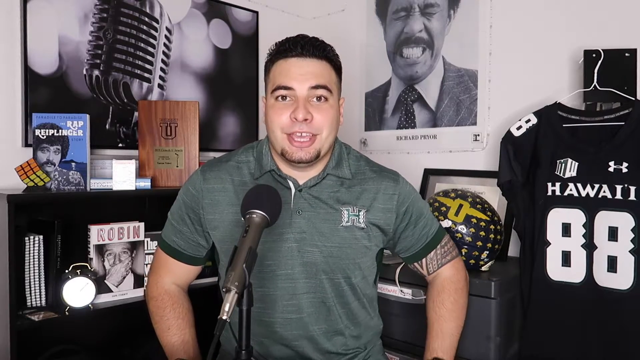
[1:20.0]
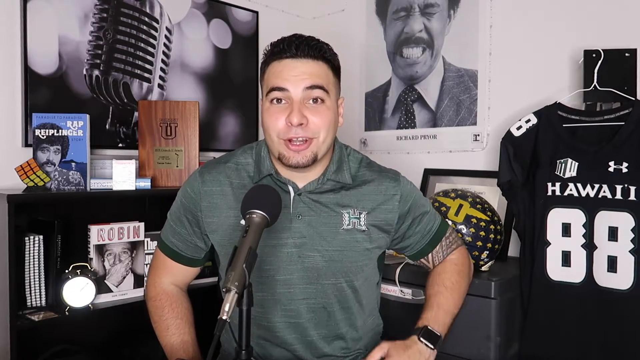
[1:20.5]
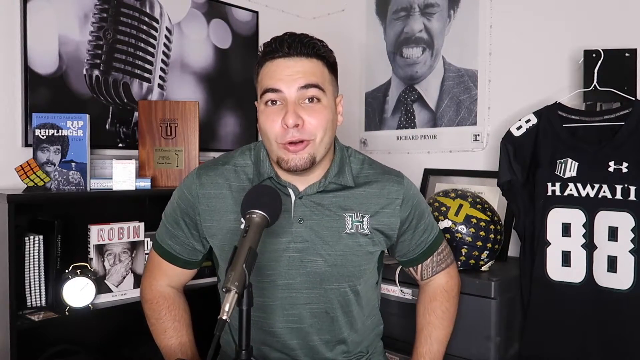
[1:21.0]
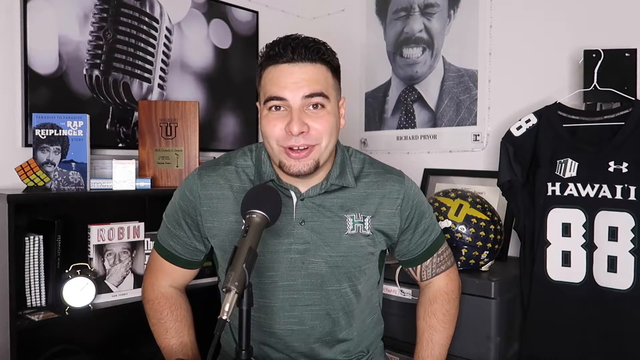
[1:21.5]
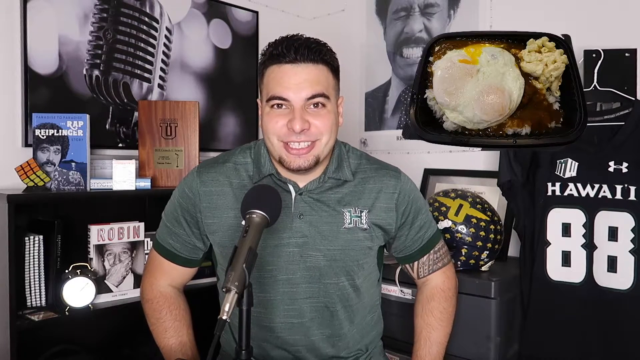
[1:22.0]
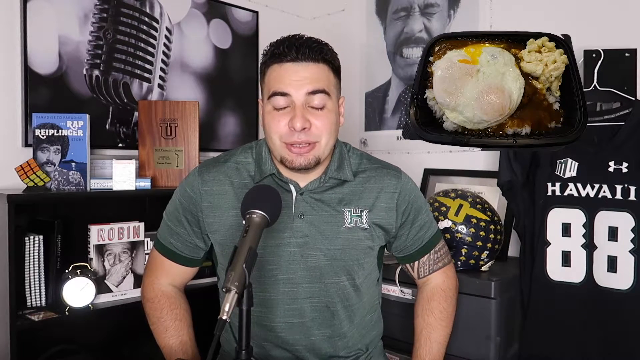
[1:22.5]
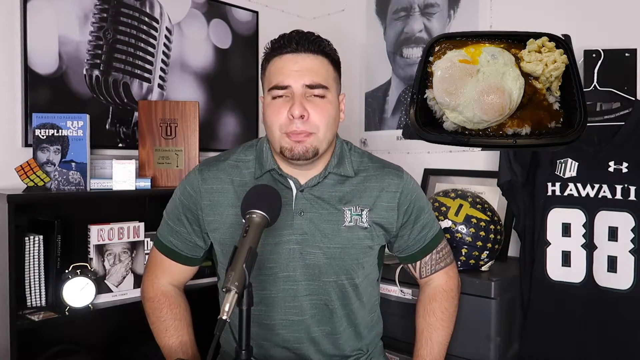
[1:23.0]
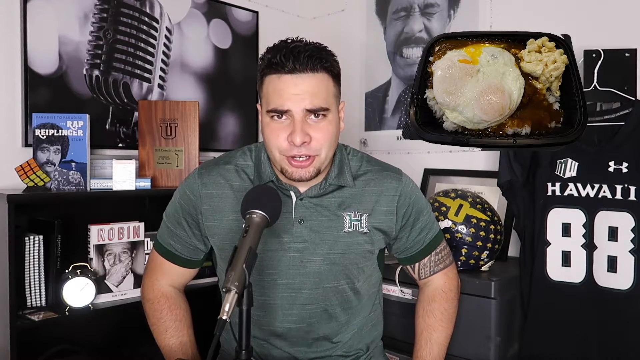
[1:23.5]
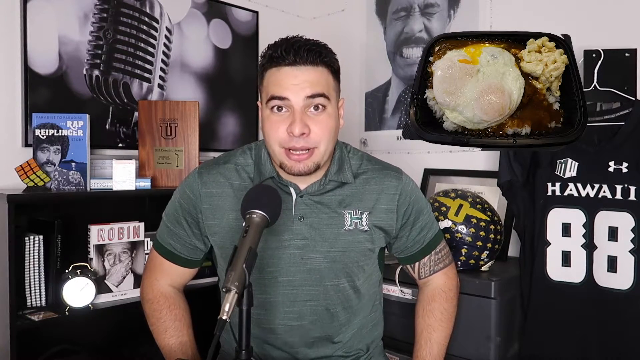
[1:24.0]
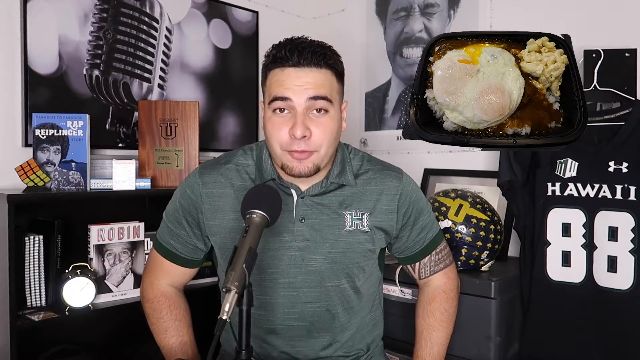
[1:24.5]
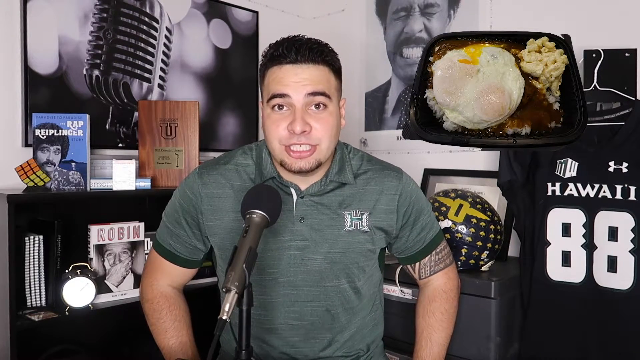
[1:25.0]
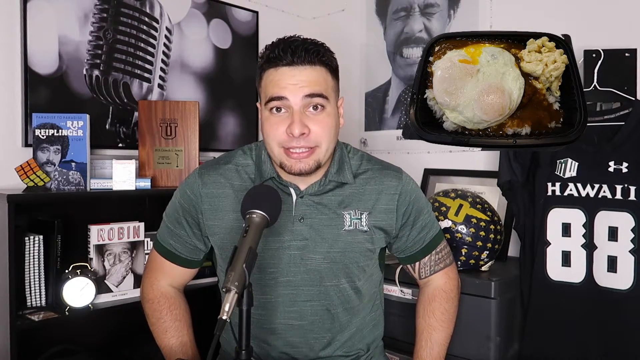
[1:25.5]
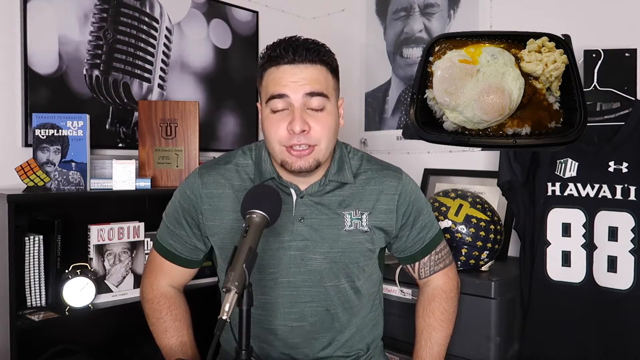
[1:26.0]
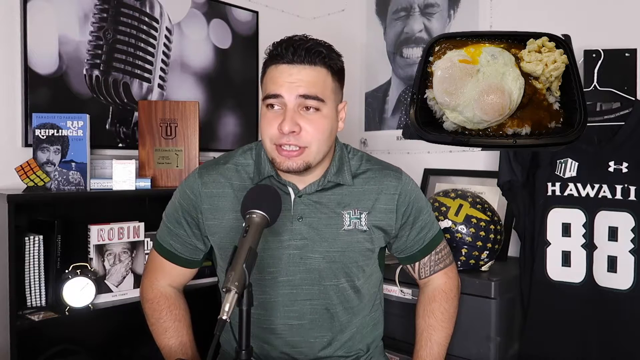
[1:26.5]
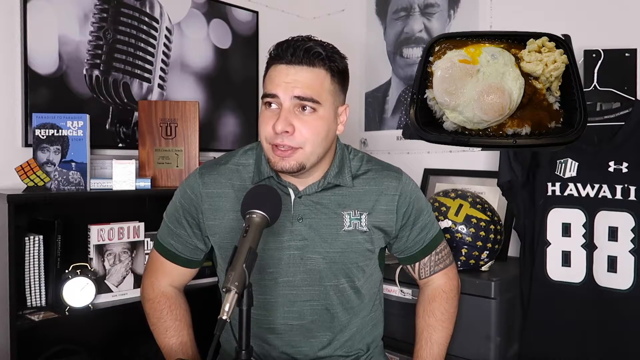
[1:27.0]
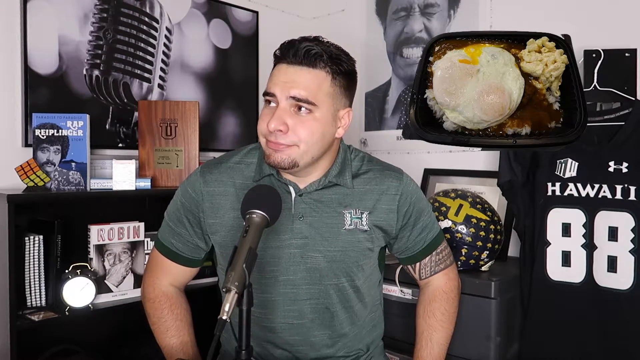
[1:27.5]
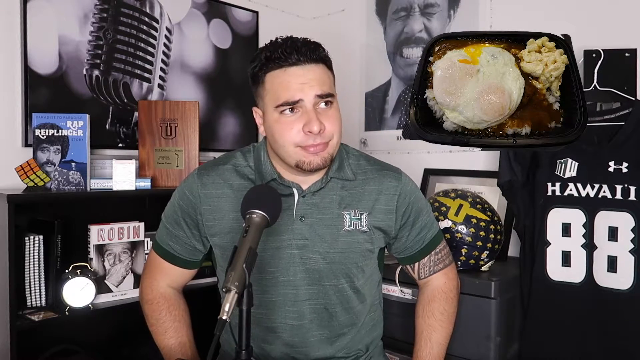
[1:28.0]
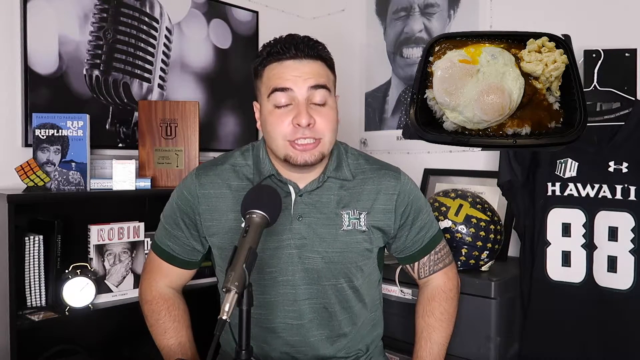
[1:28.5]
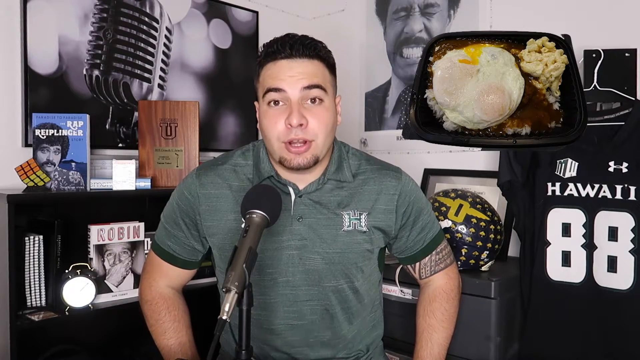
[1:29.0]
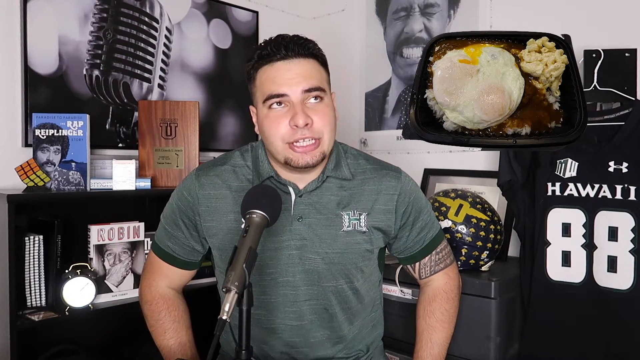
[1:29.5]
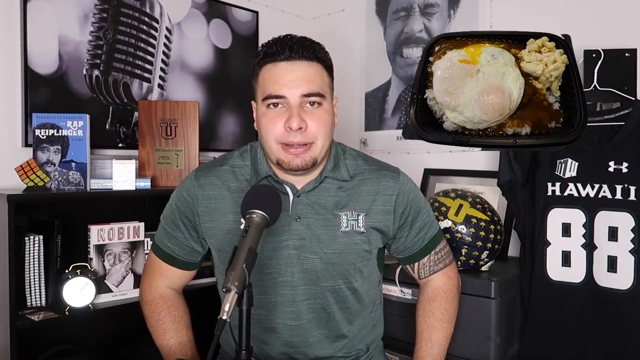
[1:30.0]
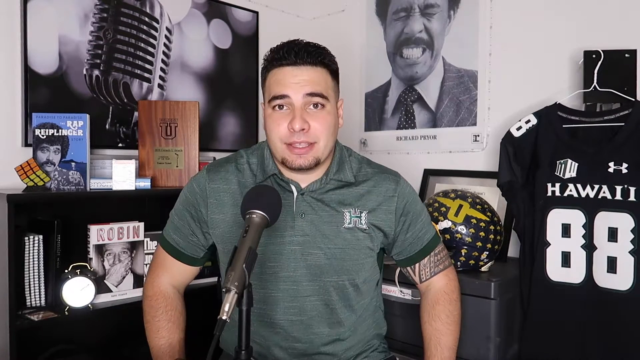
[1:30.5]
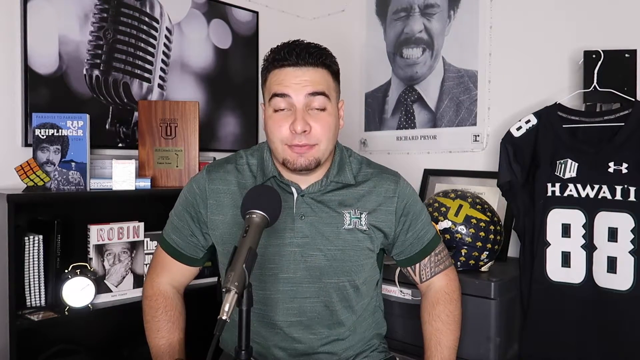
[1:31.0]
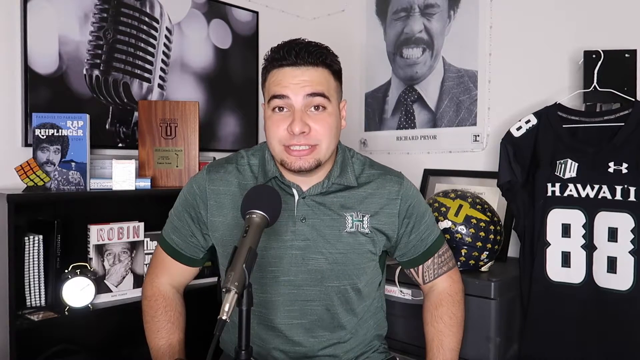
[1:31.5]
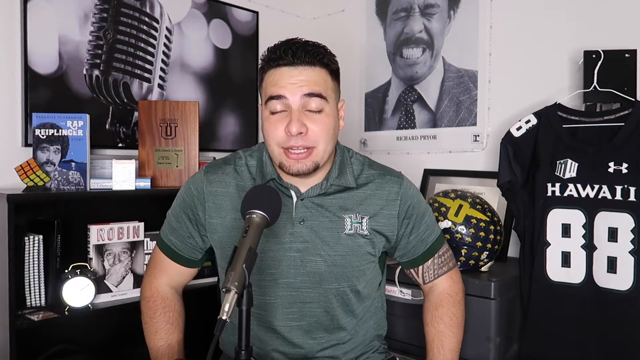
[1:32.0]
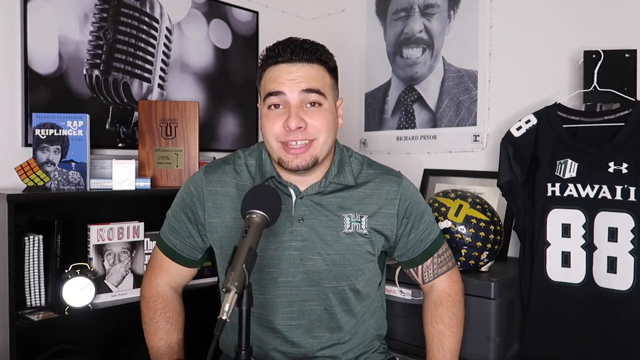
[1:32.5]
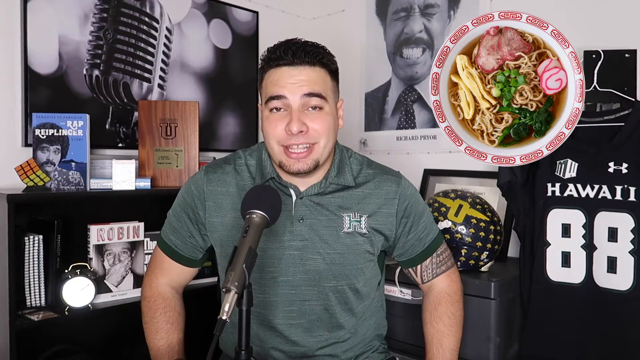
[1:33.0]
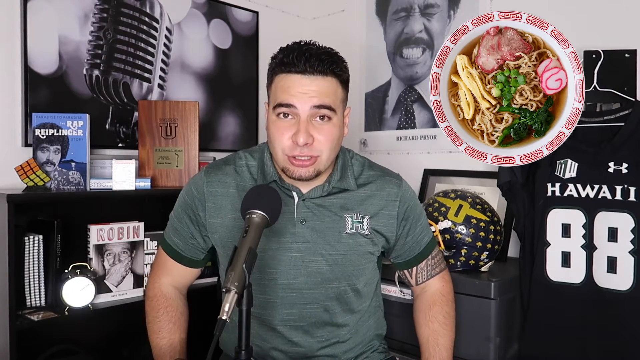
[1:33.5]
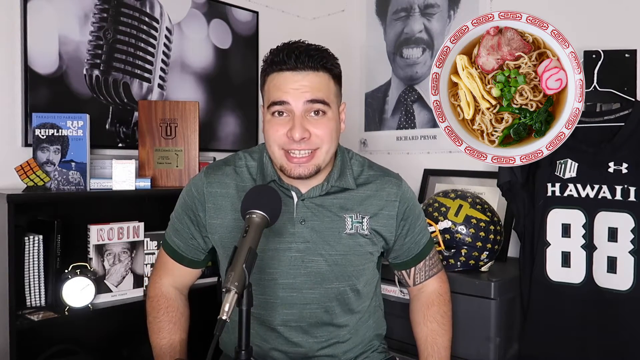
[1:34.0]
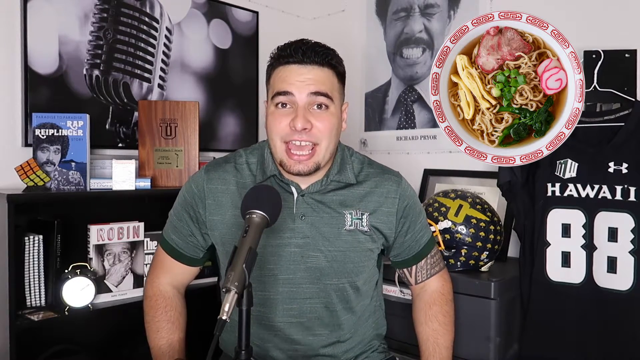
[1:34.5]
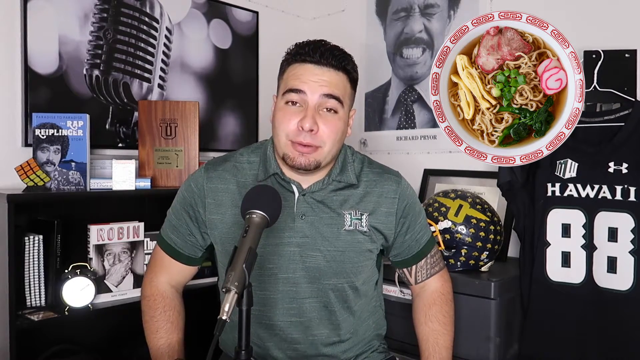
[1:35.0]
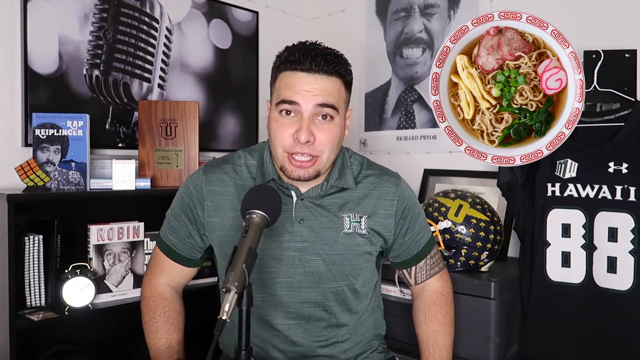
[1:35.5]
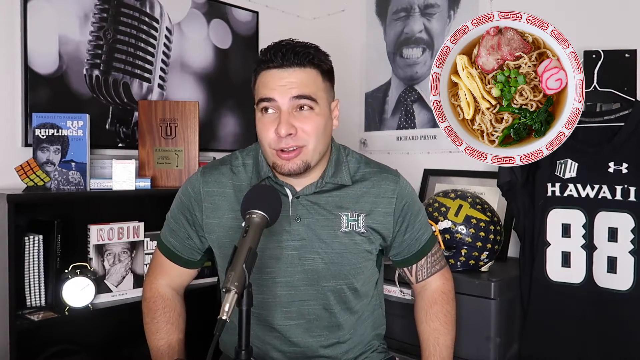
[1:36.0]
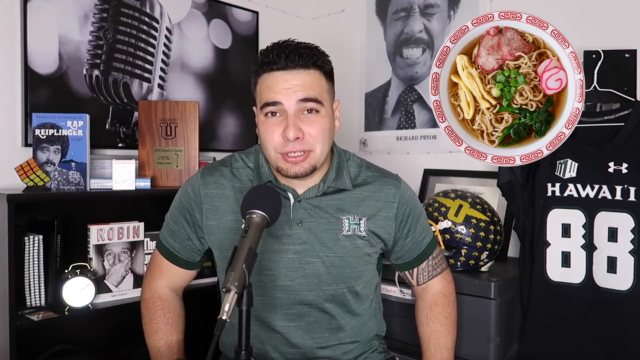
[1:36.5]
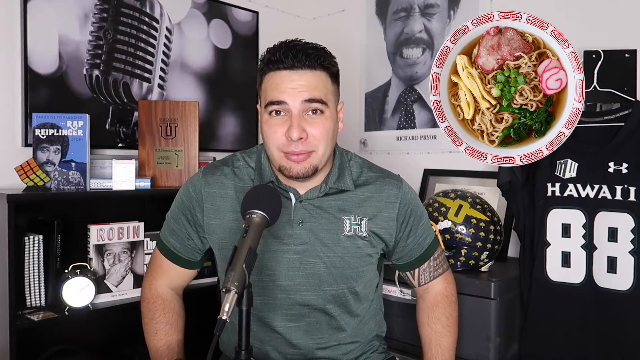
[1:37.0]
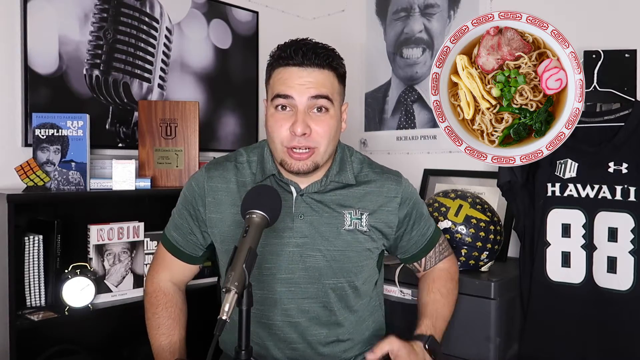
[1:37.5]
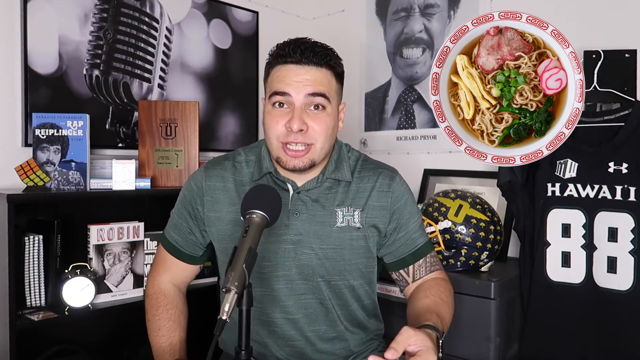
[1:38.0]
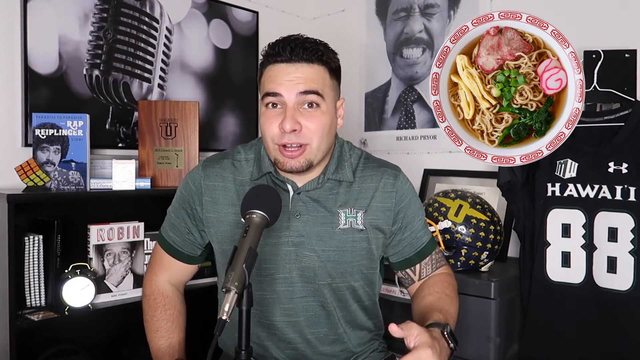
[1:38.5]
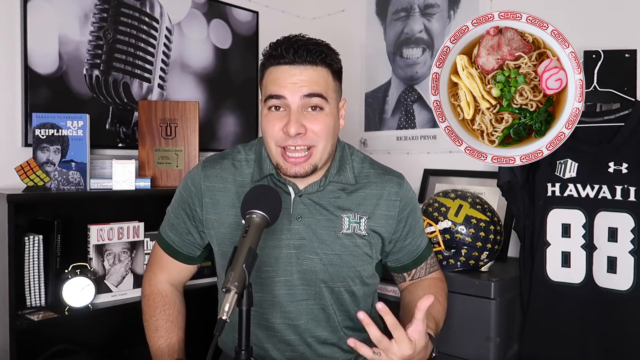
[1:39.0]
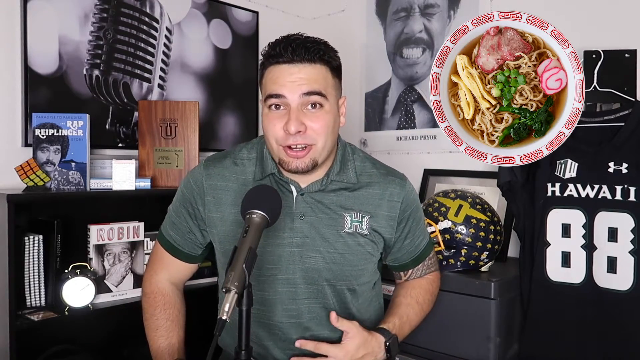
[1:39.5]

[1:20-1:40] The man in the green shirt with the H on it smiles and looks at the screen, pointing once before a new meal appears at the top right. It is slightly hard to make out, but it appears to be a bed of rice covered in some sort of gravy with a large round egg made up of two yolks, seemingly two or three eggs in one single fried object, with what appears to be mac and cheese at the top right. The man looks fairly excited about this dish, smiling and looking off almost wistfully from side to side as he talks. That meal then disappears and is replaced by a round bowl of what appears to be some sort of Japanese ramen dish, with pickled radishes at the top right, some sort of cut of beef at the very top, apparently tofu on the left, and a bed of noodles underneath, inside a red and white Japanese- or Chinese-style plate.